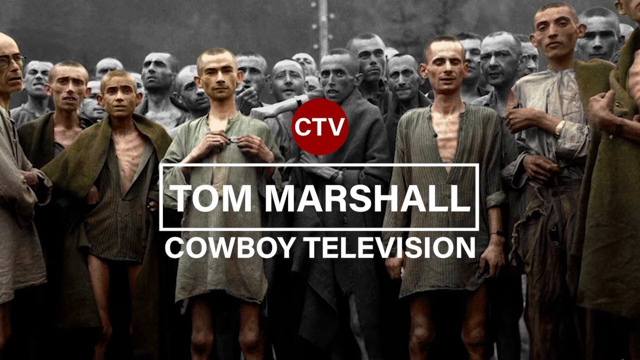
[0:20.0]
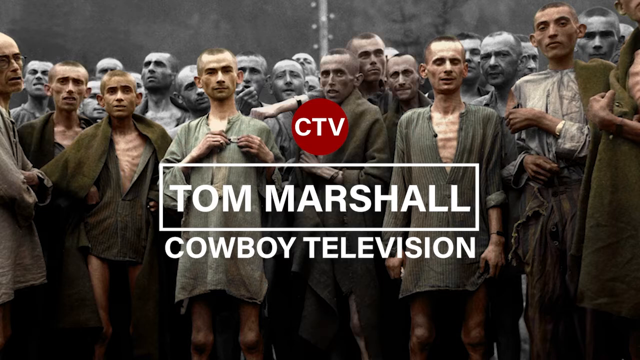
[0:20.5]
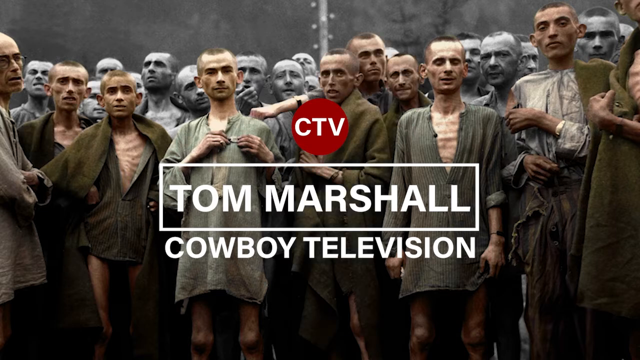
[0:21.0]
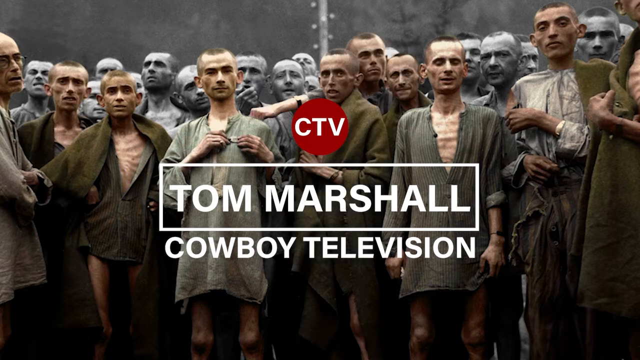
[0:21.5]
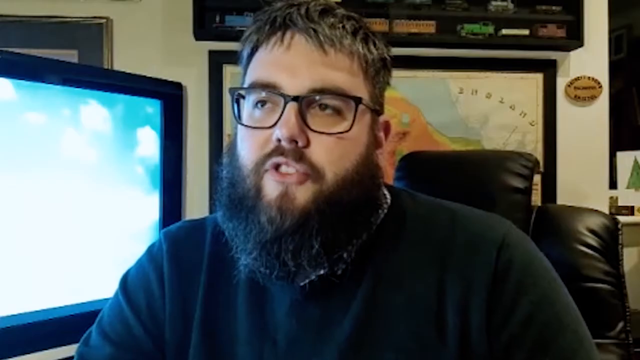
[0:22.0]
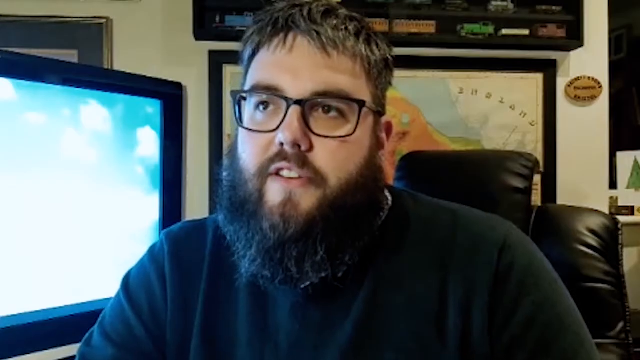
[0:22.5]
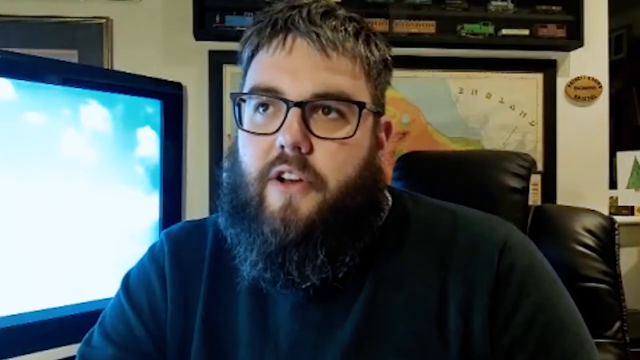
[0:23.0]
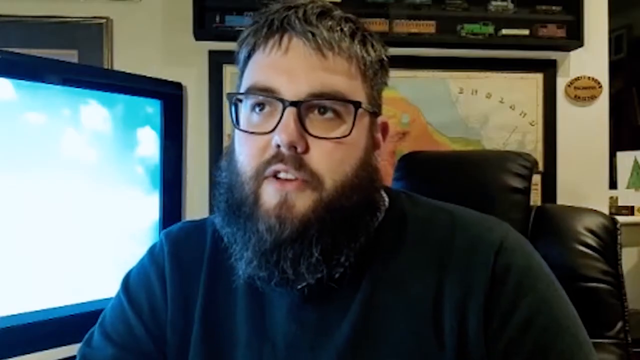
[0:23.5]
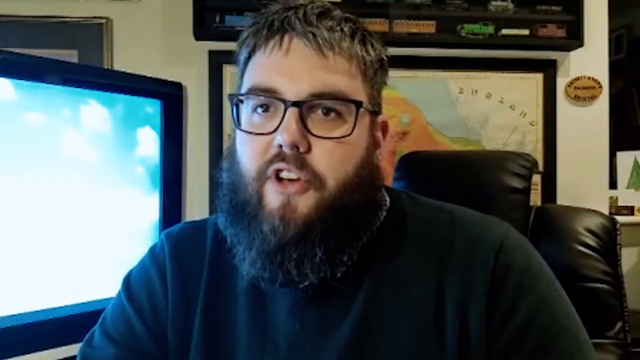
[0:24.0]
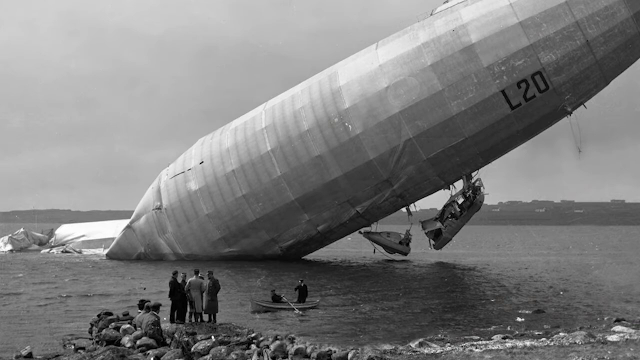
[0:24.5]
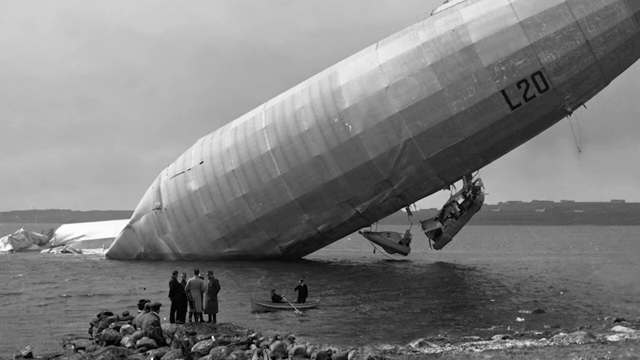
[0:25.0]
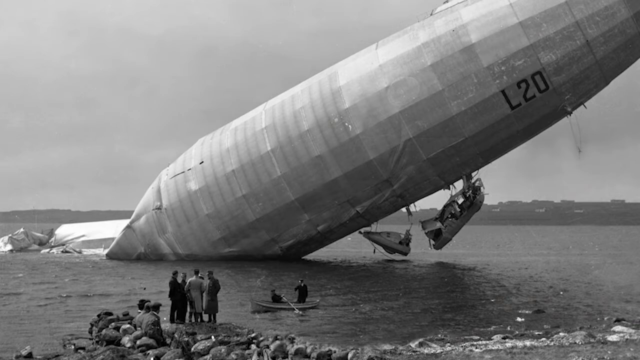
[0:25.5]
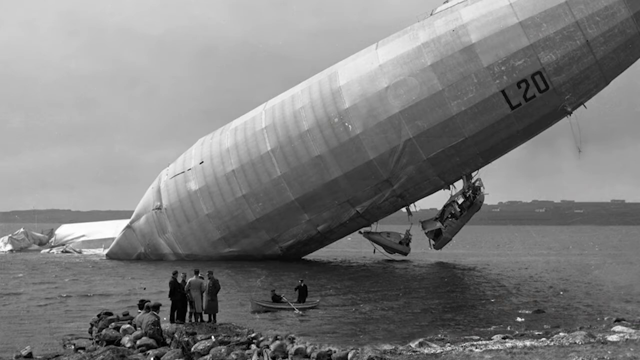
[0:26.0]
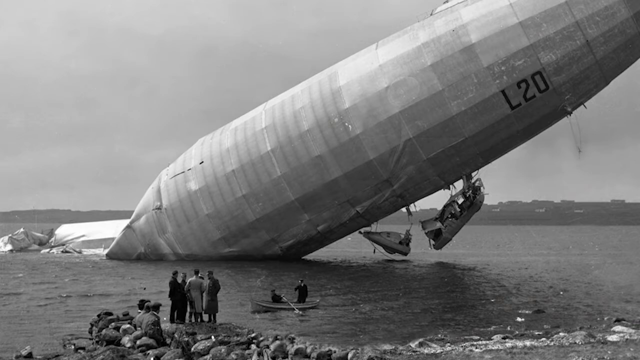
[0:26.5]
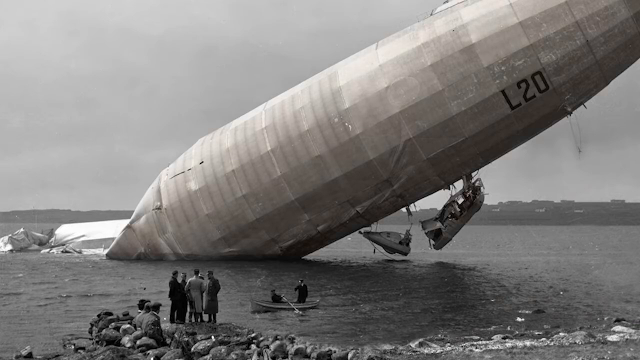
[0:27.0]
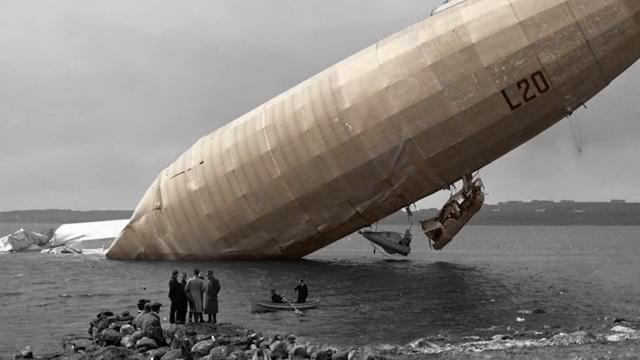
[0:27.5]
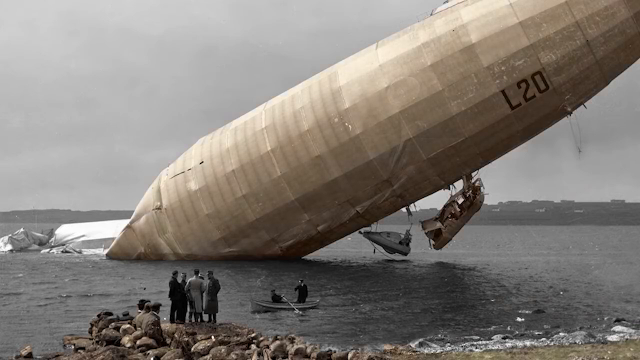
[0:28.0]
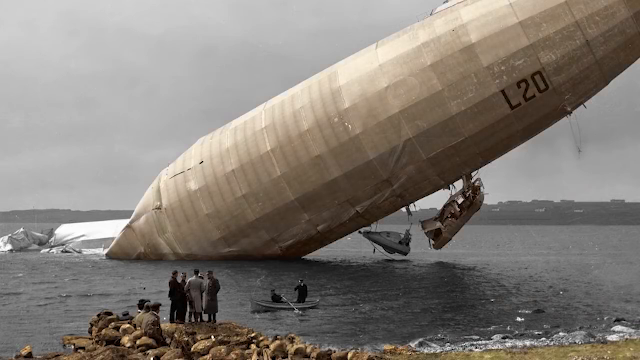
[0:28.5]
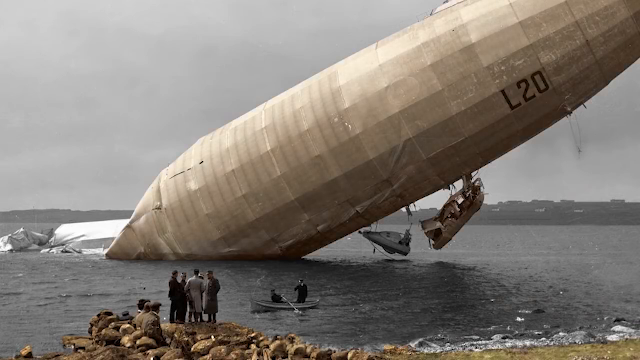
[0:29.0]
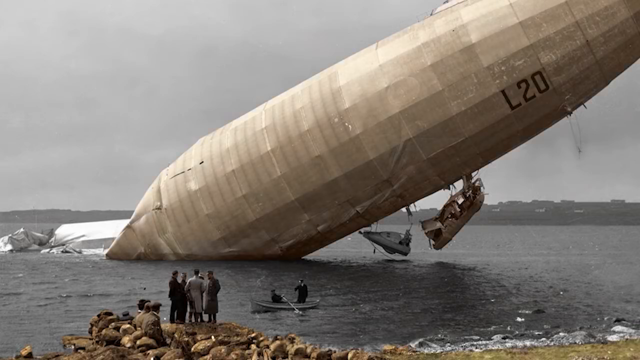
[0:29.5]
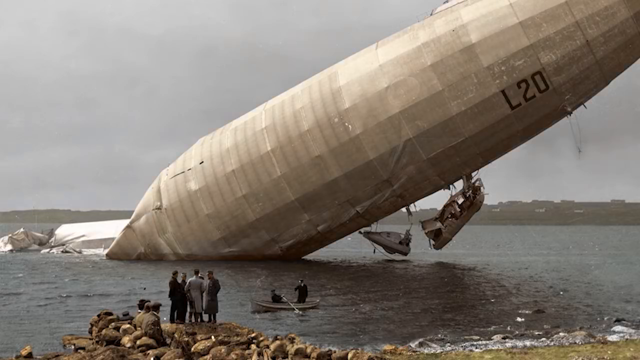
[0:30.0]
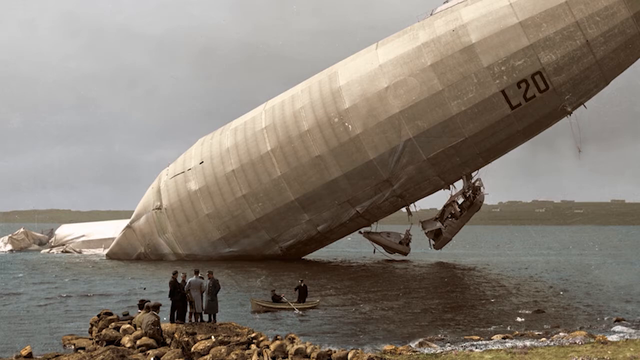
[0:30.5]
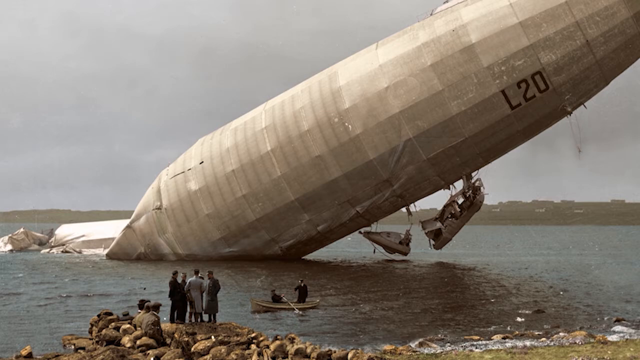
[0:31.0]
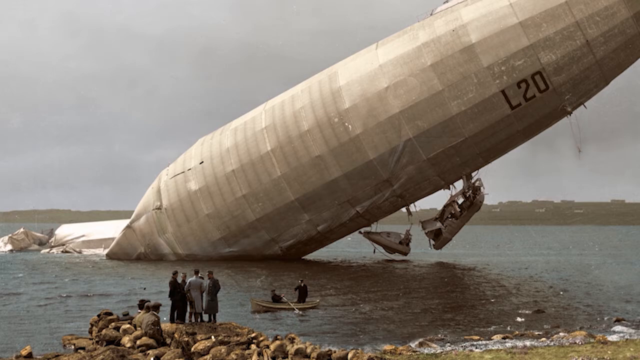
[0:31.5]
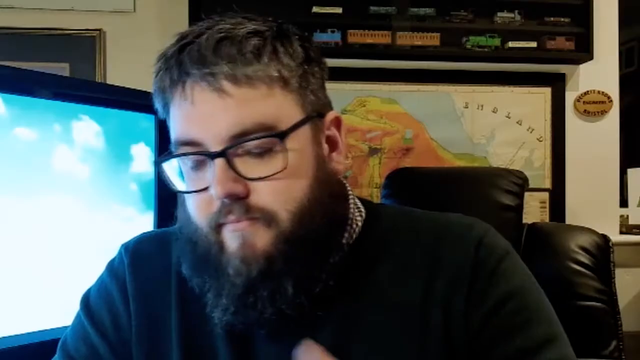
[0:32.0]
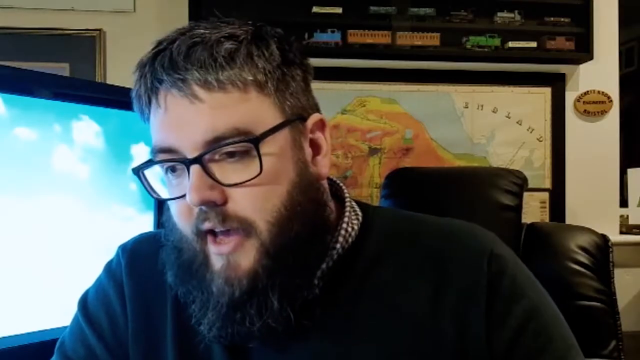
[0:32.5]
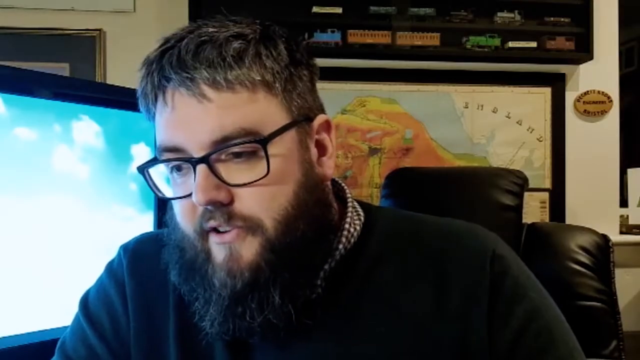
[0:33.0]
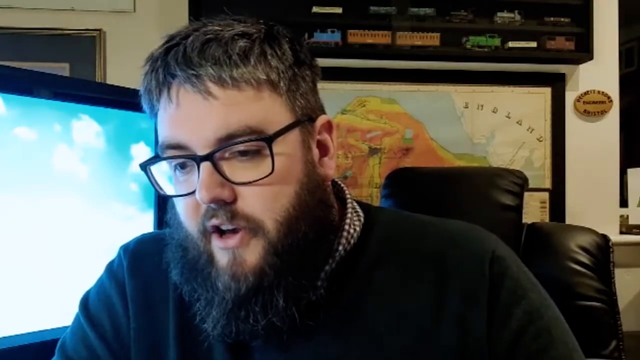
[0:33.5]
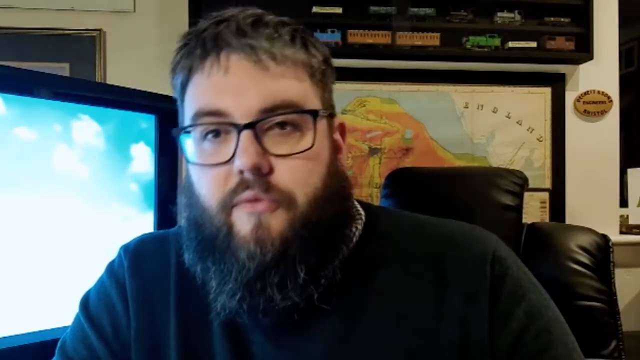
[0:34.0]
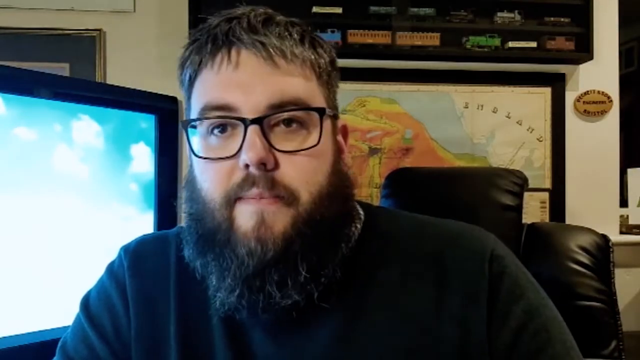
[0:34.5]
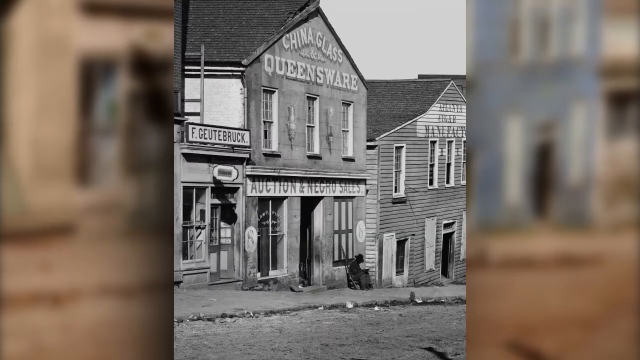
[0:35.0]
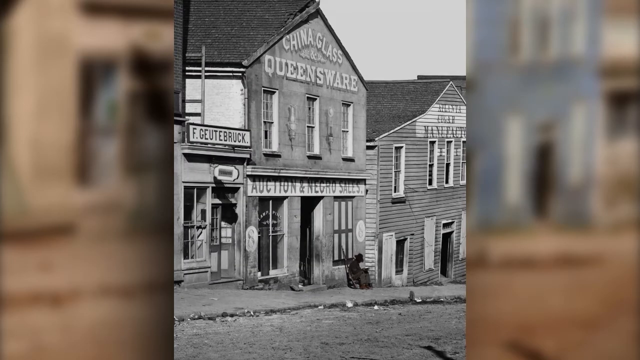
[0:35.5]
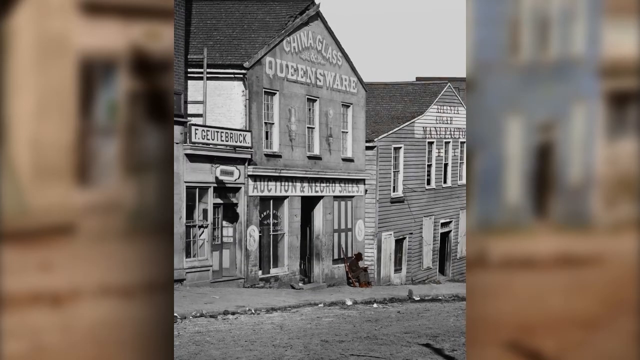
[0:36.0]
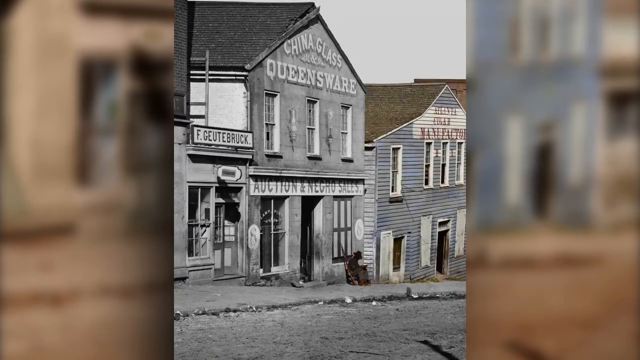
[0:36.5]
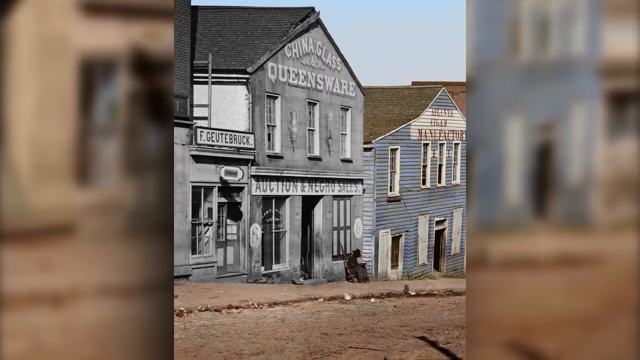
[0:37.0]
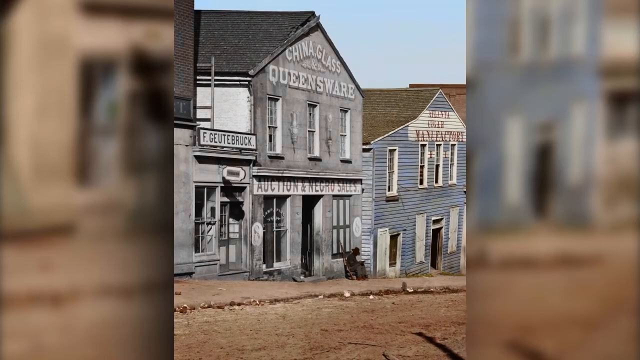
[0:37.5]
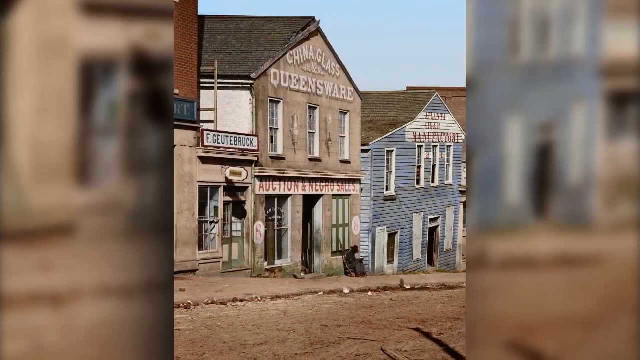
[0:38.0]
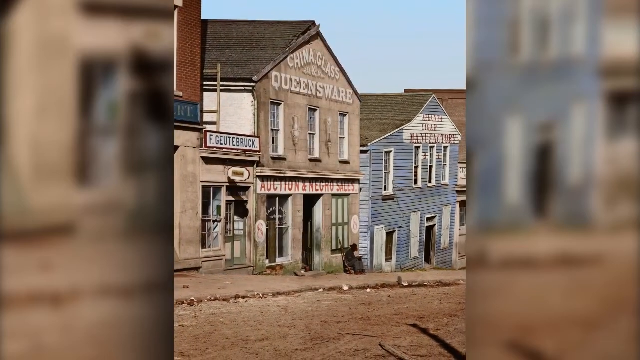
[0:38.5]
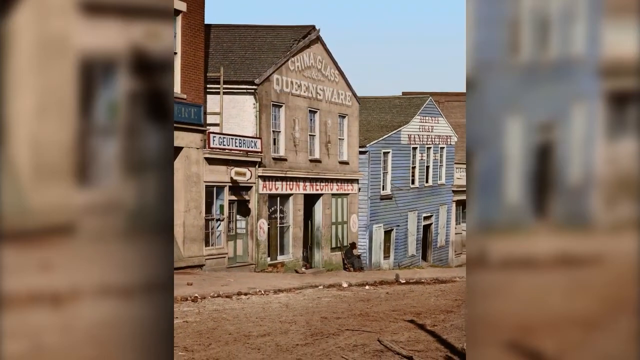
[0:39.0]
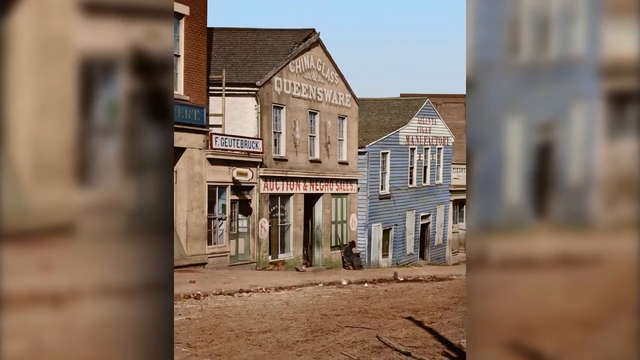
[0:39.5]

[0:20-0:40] The man appears again, wearing a black shirt, with a beard and glasses, a computer screen to his right (the viewer's left), a map-looking thing with a black border behind him, and a shelf with what looks like toy trains. He speaks to the camera. Next is what could be Chernobyl, a blimp that blew up or fell, or something else, with "L-20" on it. Under gray skies, the contraption has landed in the water. The image turns into color; the skies are still gray, and land in the distance does not look green but rather kind of tan. The video returns to the man talking to the camera in black-rimmed glasses and a black shirt or sweater. Then an old photograph of an auction appears, apparently from slavery times, with a racial term and "sales" on a building; one building is brown and another is blue.